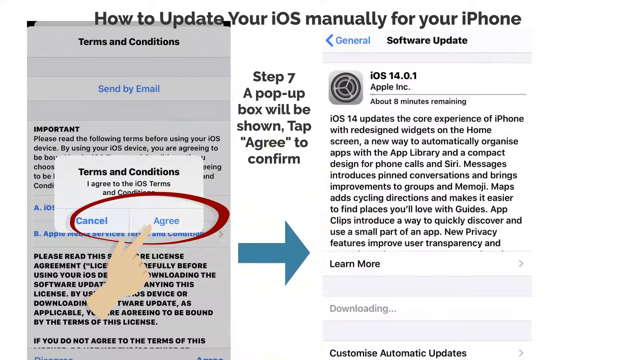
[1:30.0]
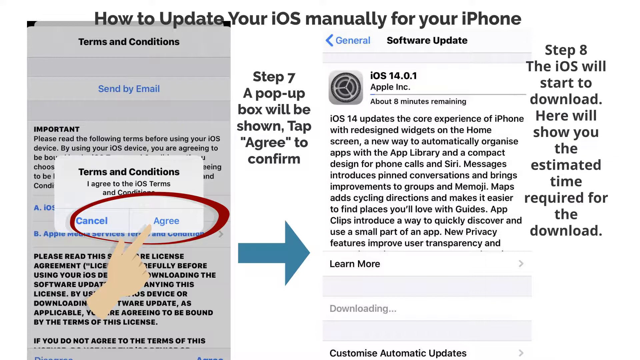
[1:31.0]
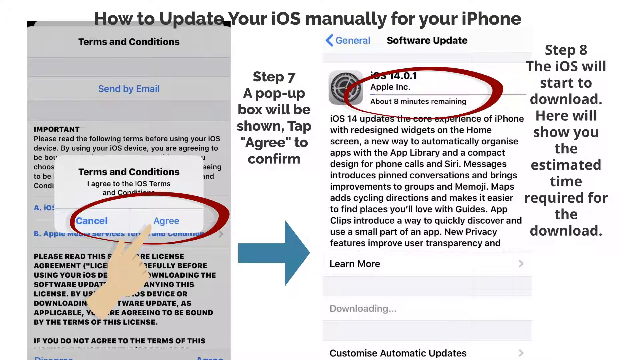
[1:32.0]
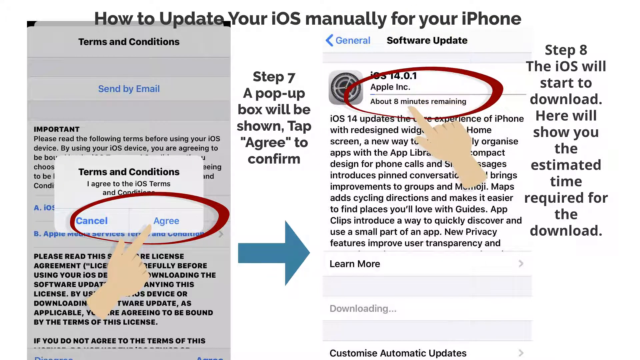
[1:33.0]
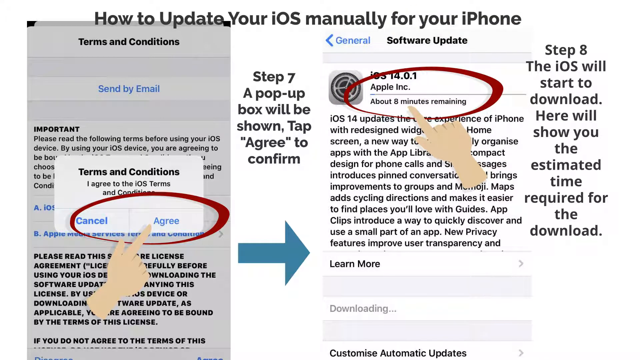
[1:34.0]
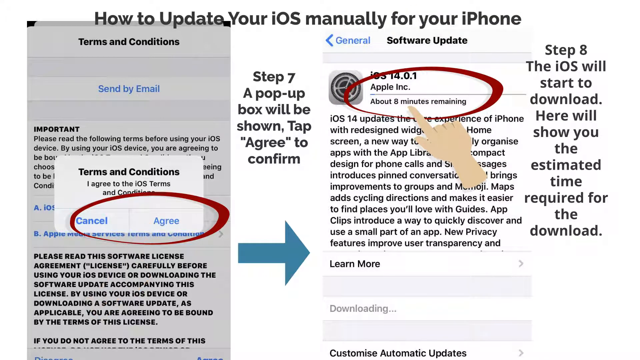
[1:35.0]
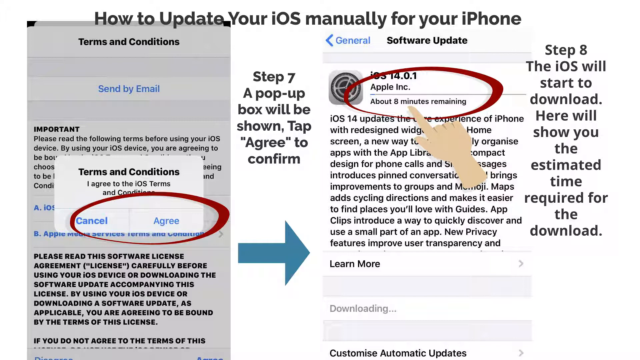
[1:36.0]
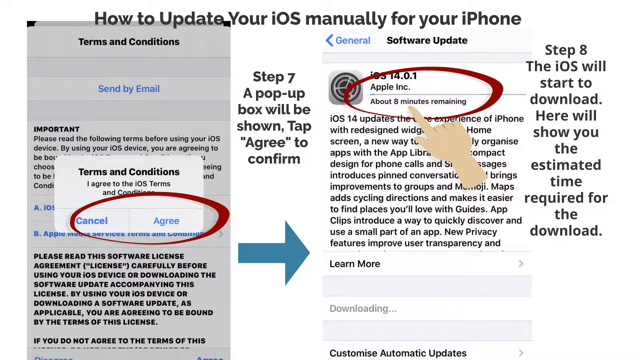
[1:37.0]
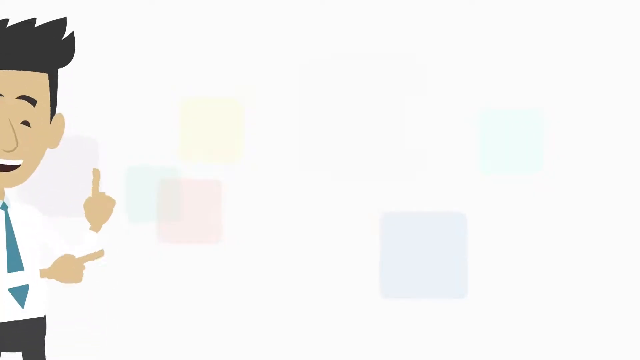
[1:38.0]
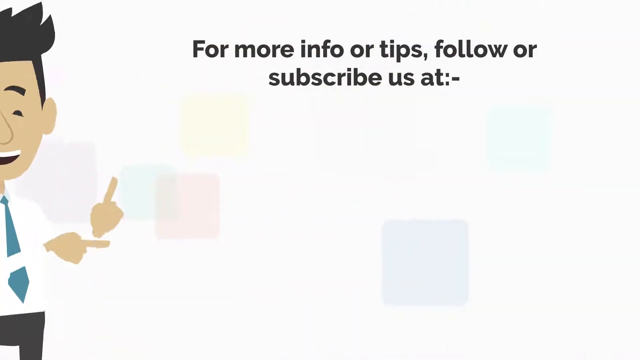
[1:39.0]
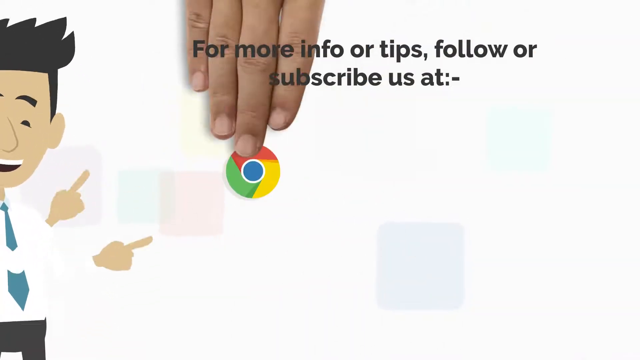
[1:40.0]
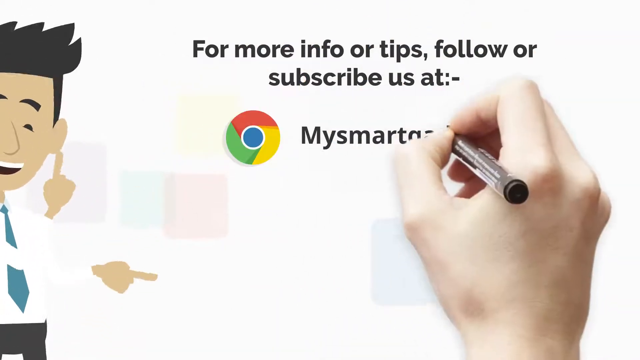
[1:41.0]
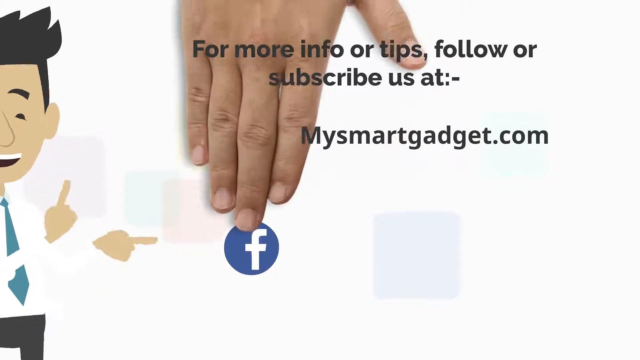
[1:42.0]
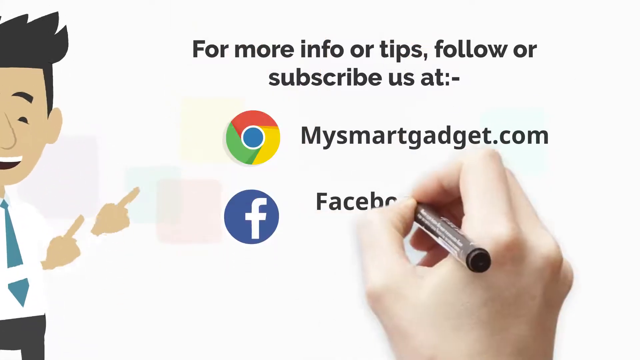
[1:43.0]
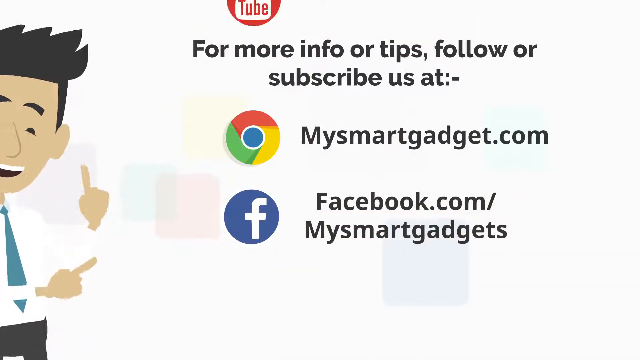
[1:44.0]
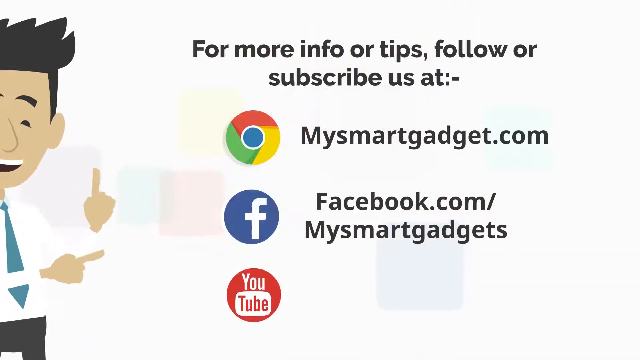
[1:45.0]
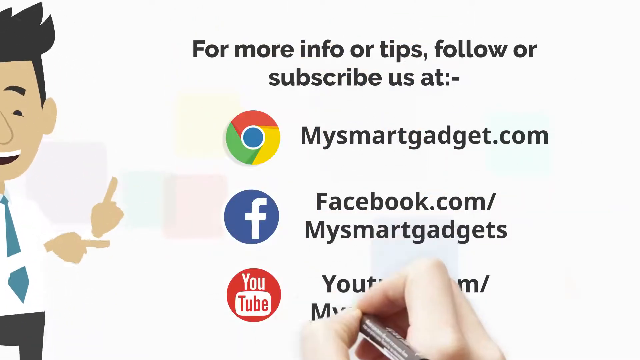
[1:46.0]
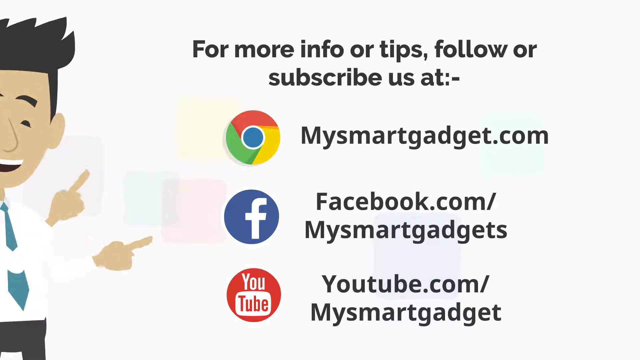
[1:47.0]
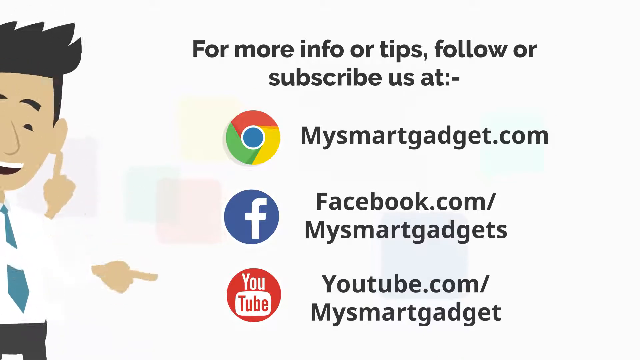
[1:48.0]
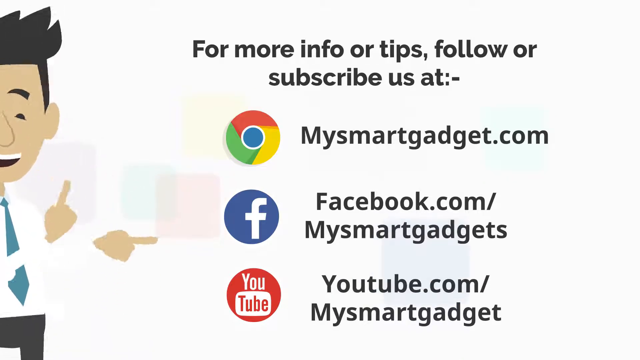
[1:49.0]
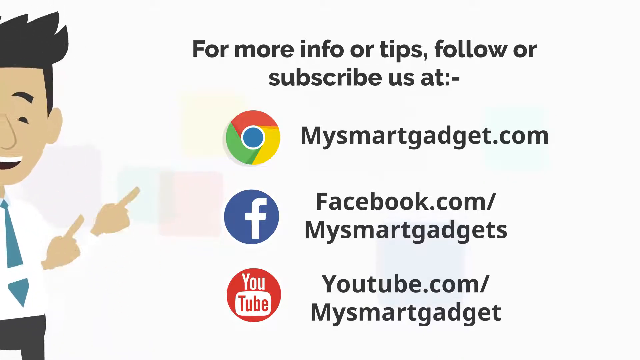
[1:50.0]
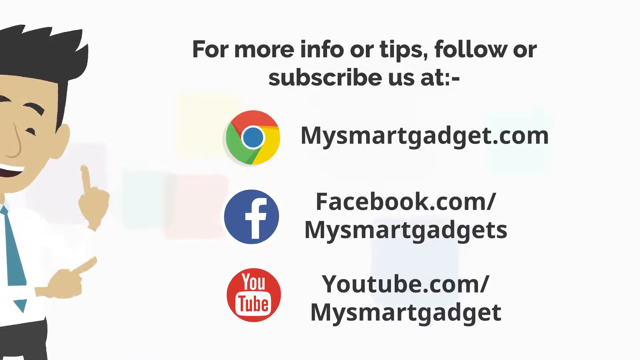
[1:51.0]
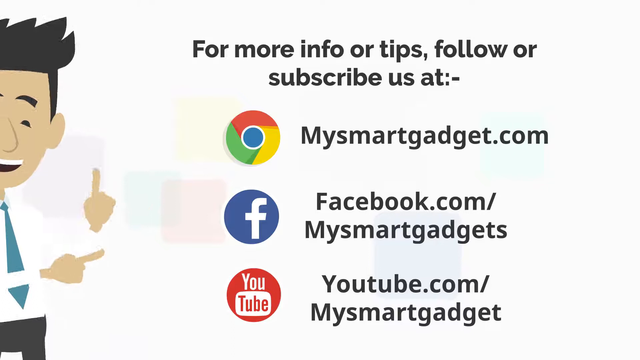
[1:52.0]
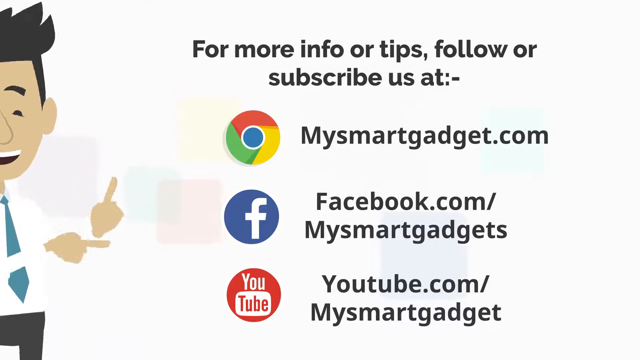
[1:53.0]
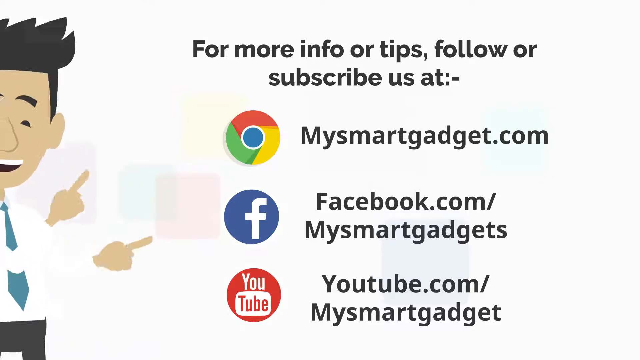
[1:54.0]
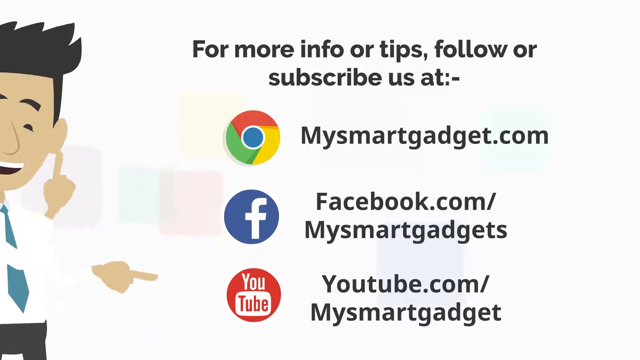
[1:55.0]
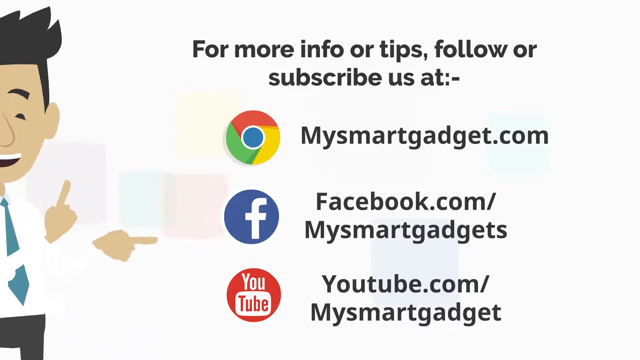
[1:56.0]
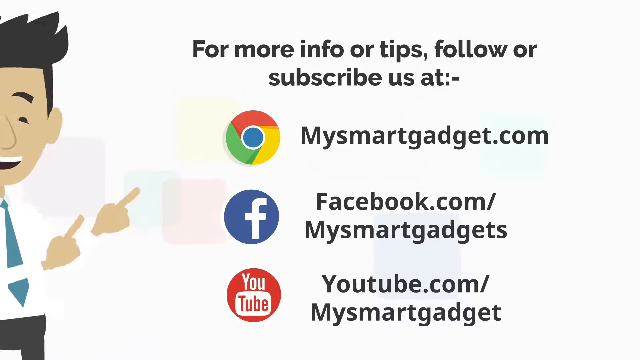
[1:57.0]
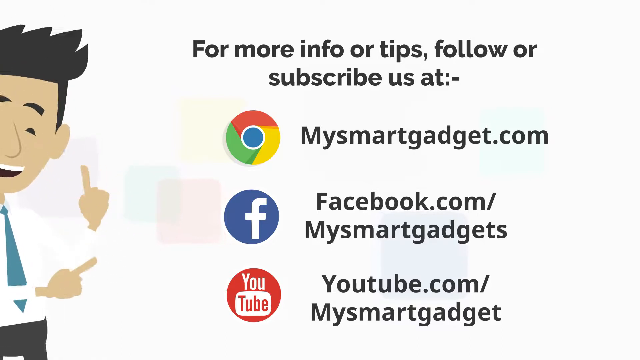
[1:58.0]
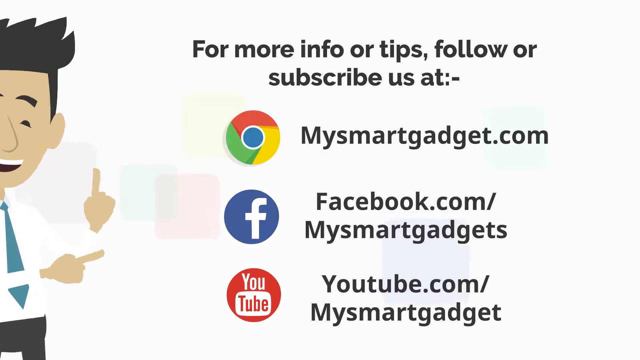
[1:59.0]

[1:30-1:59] The "8 minutes remaining" information on the software update screen is highlighted, apparently indicating that the download of iOS 14.0.1 has started and will take around 8 minutes before it can be installed. Next, an illustration of a happy man points and waves his hands up and down; he seems to be pointing to text that says "for more info, tips, follow or subscribe at mysmartgadget.com". A Facebook icon and a Google Chrome icon are shown. The hand writes another URL, "facebook.com/mysmartgadget", which seems to be the content creator's Facebook page, and then "youtube.com/mysmartgadget" alongside the YouTube icon, apparently the creator's YouTube channel. The illustrated man keeps moving, and the video ends on this screen. The screen has a white background with what seem to be very low-opacity squares in yellow, green, lavender, and something like peach or salmon, which are hardly visible.